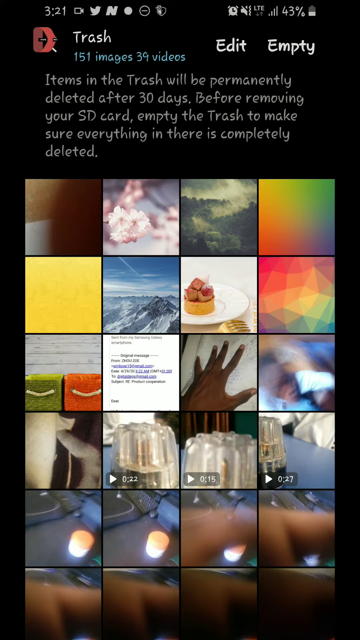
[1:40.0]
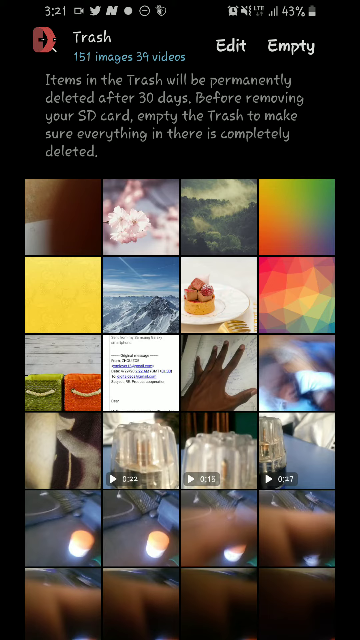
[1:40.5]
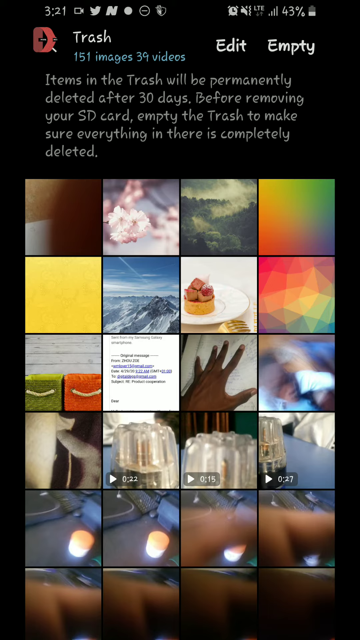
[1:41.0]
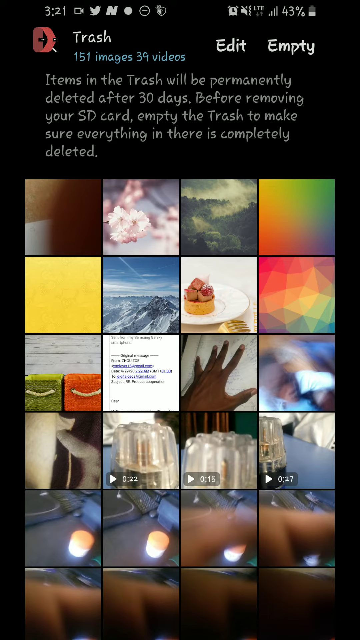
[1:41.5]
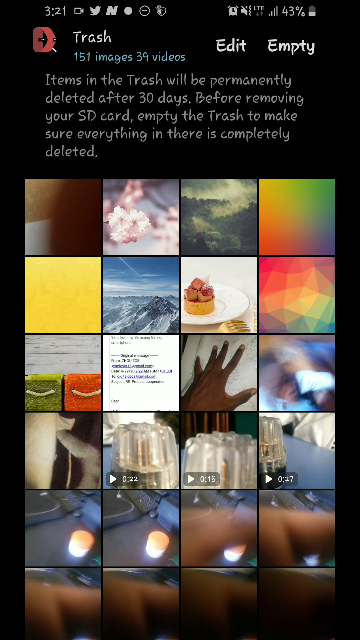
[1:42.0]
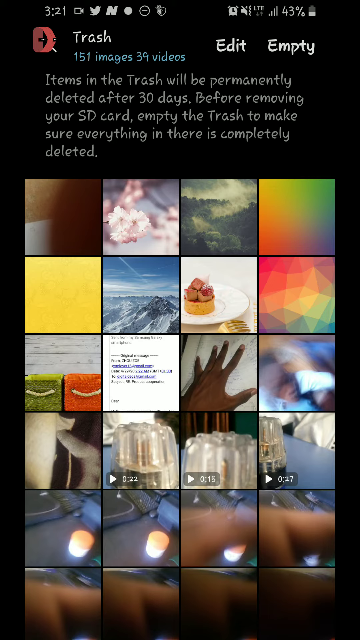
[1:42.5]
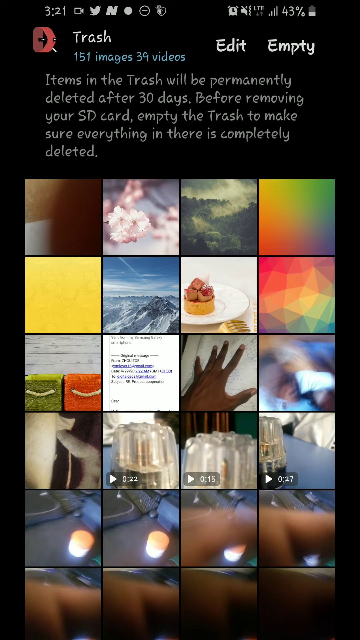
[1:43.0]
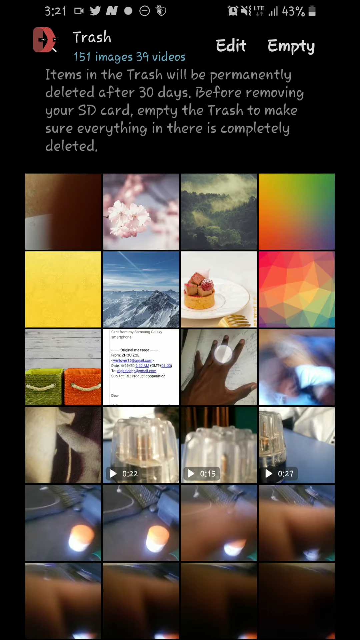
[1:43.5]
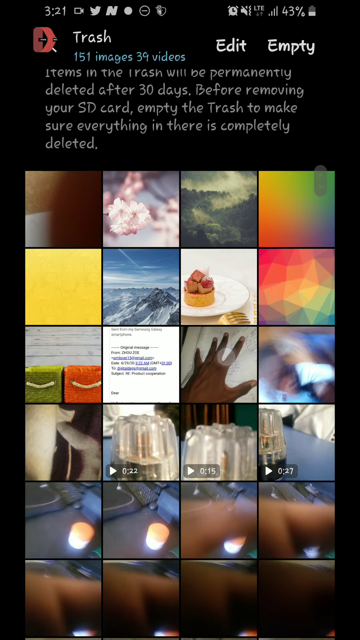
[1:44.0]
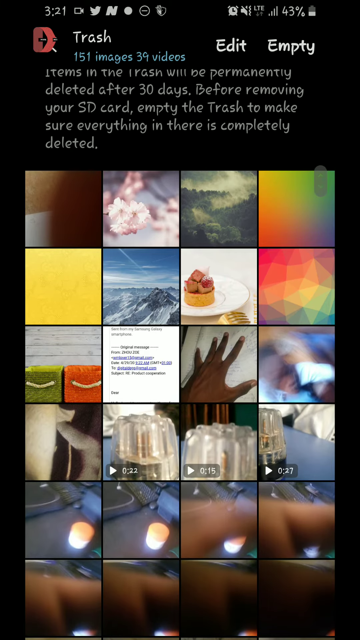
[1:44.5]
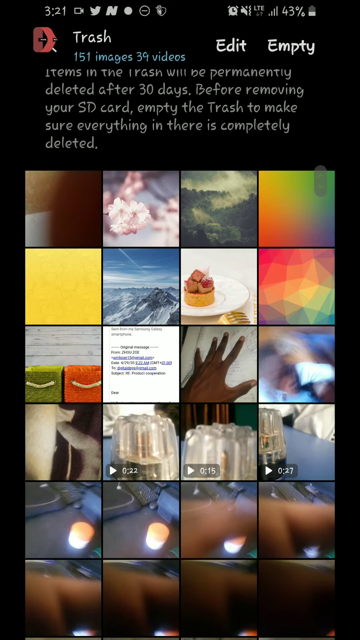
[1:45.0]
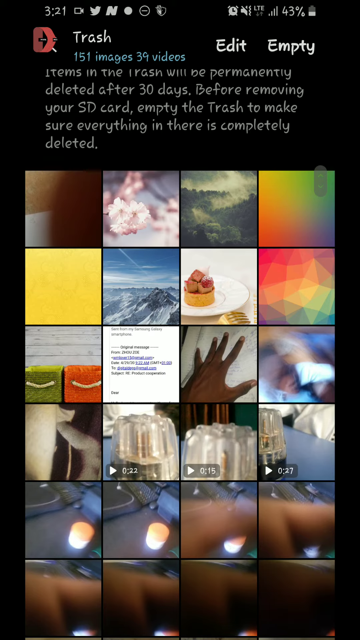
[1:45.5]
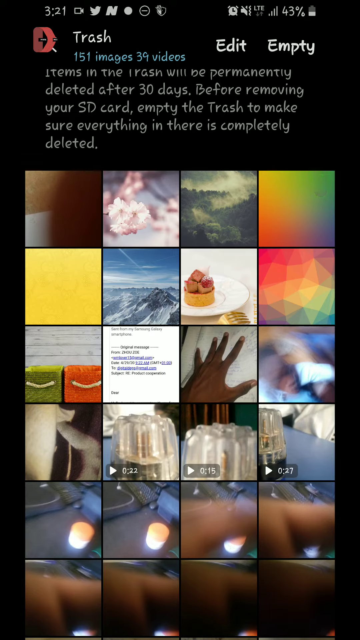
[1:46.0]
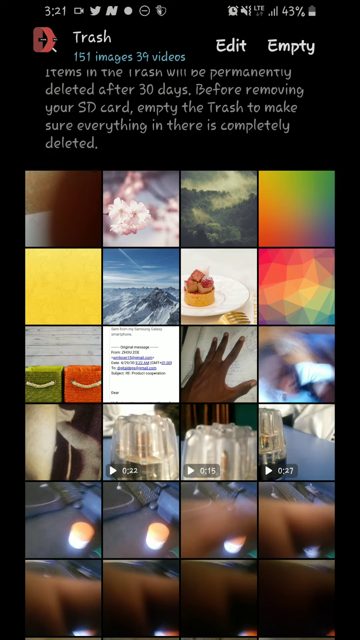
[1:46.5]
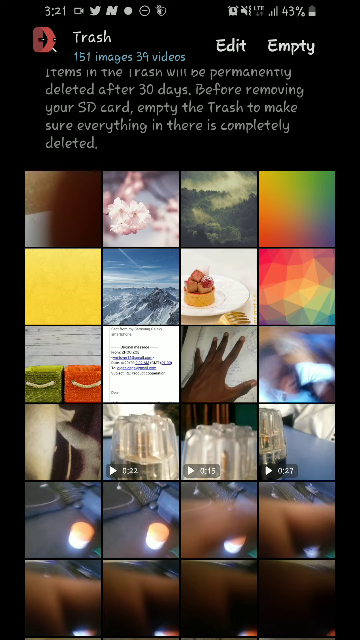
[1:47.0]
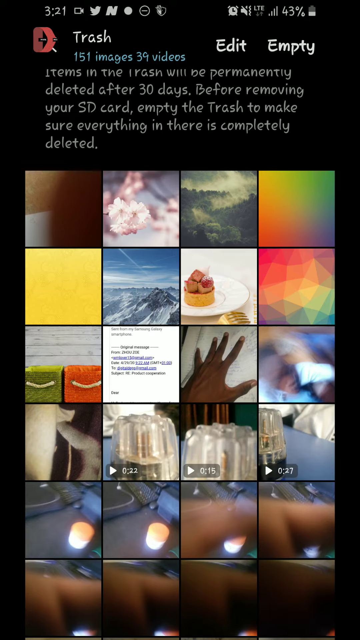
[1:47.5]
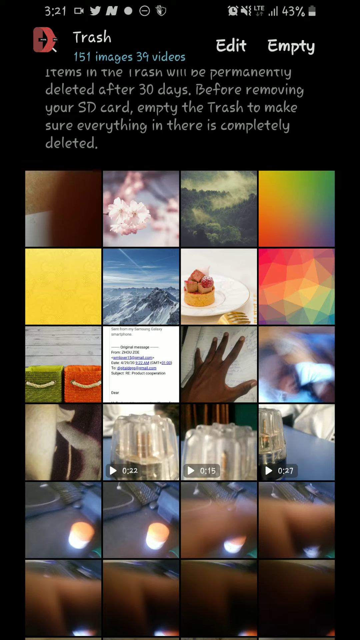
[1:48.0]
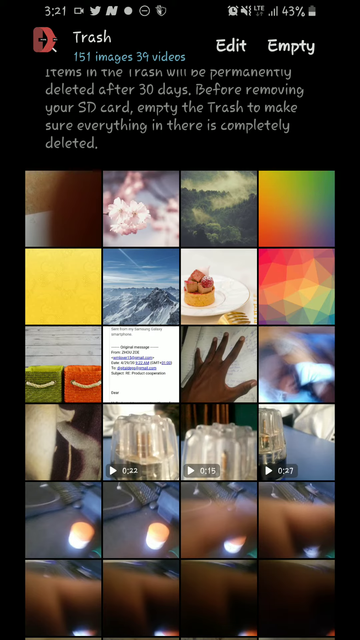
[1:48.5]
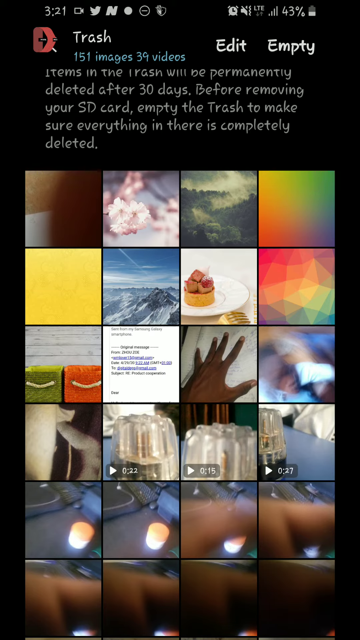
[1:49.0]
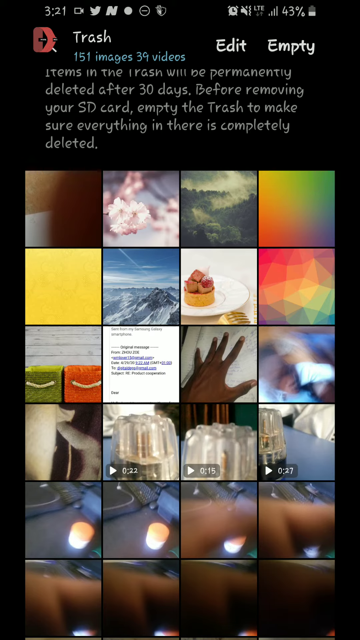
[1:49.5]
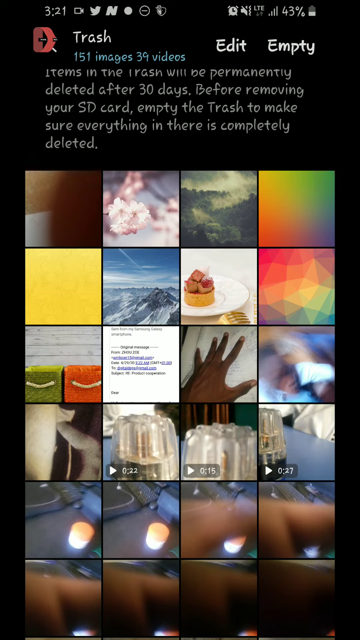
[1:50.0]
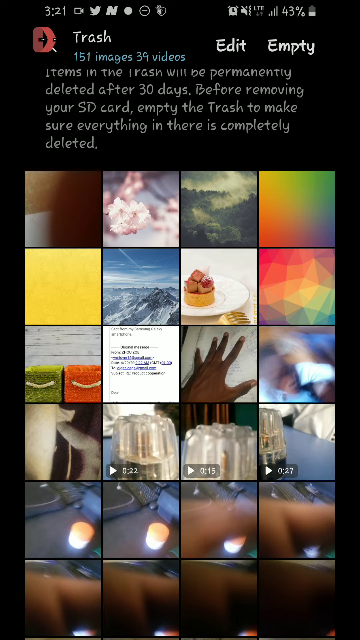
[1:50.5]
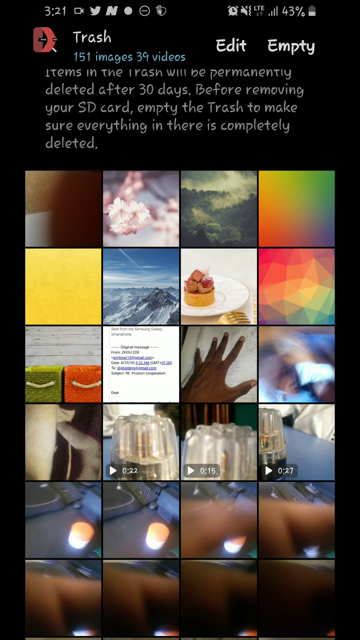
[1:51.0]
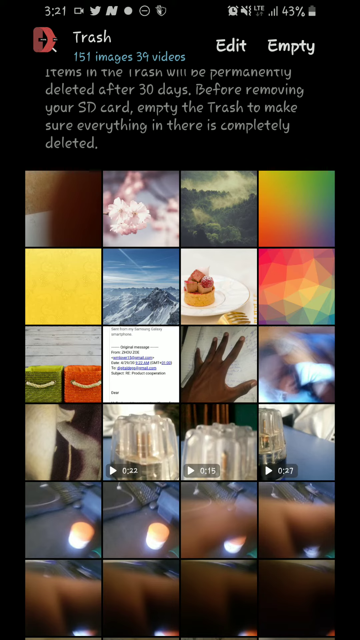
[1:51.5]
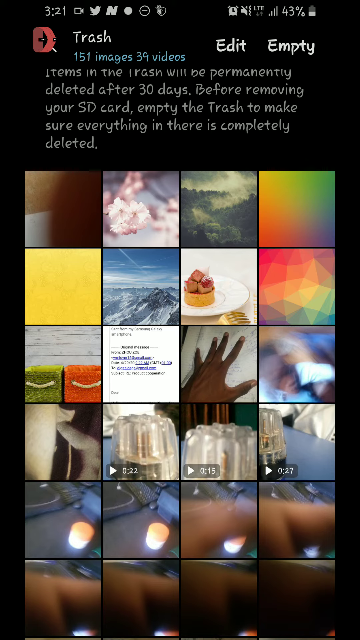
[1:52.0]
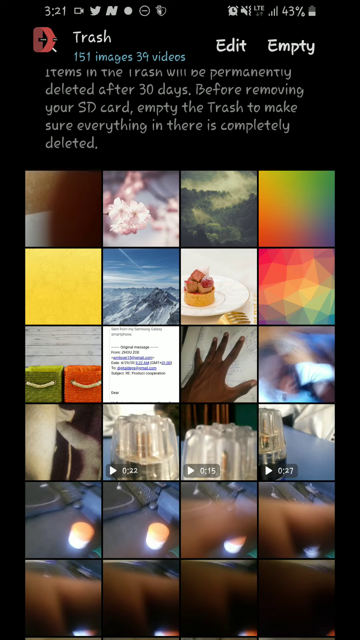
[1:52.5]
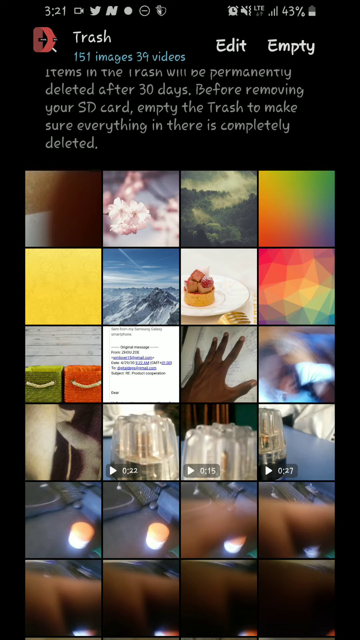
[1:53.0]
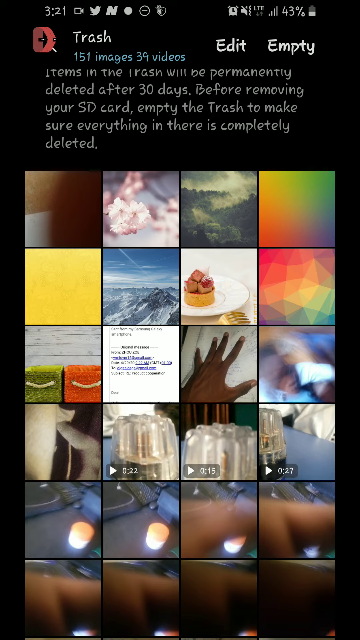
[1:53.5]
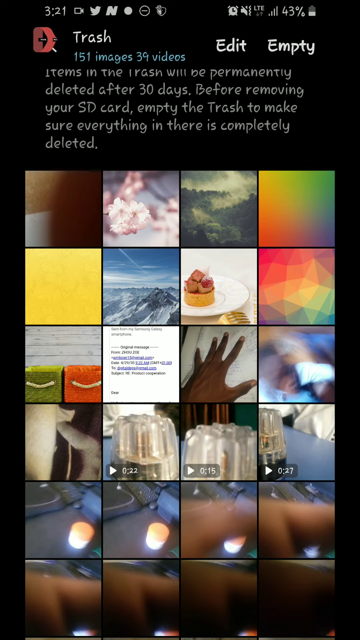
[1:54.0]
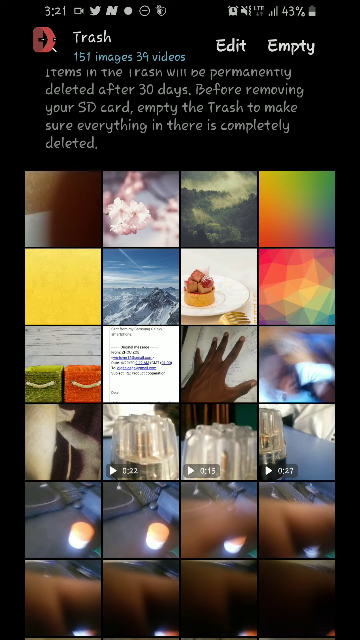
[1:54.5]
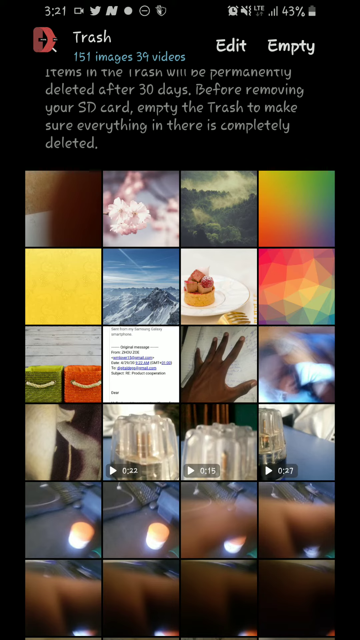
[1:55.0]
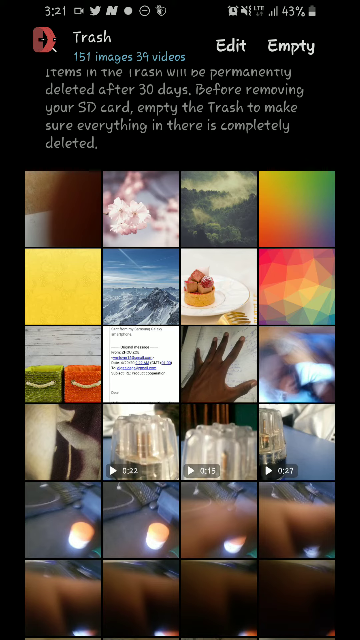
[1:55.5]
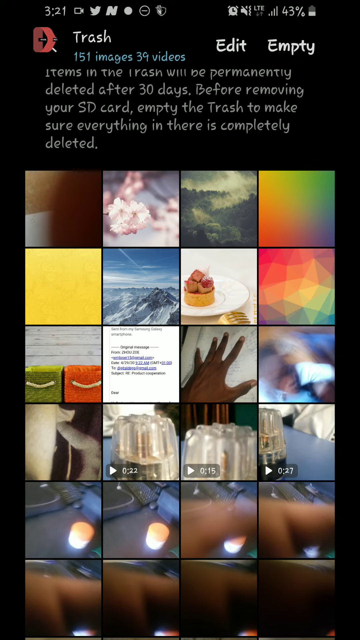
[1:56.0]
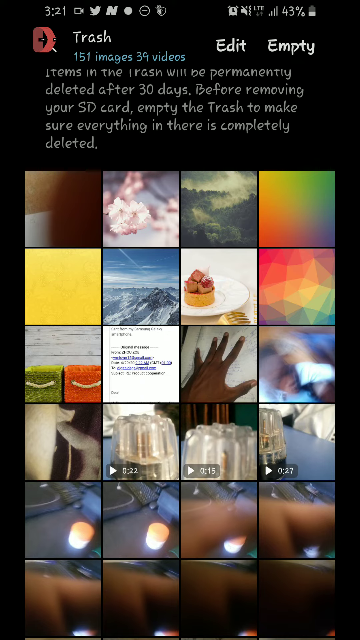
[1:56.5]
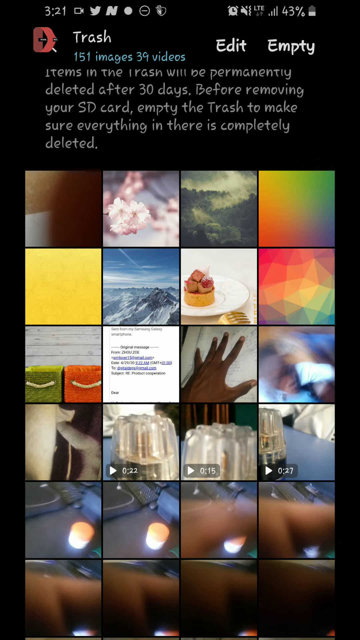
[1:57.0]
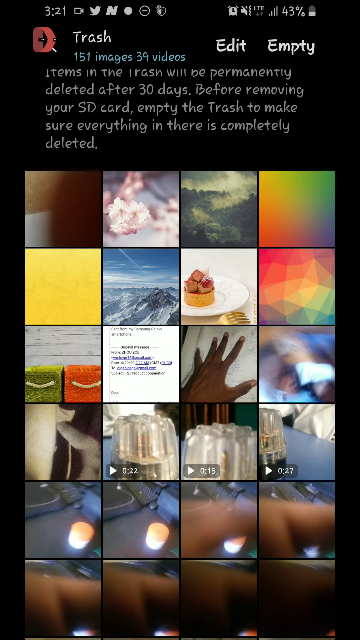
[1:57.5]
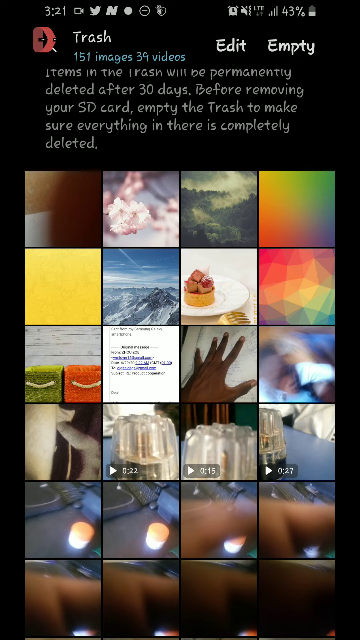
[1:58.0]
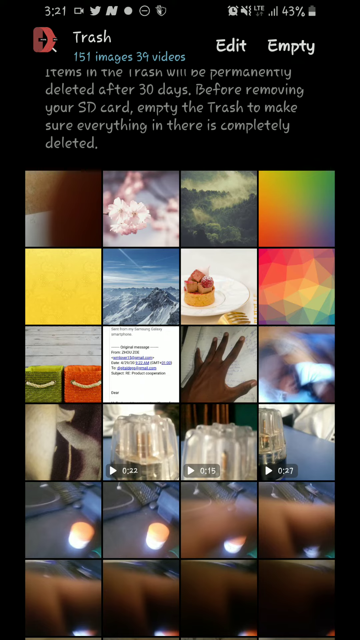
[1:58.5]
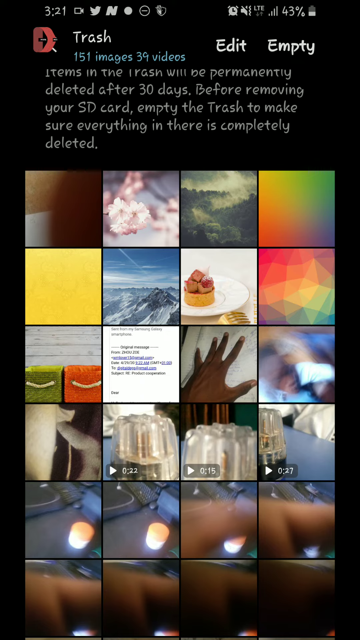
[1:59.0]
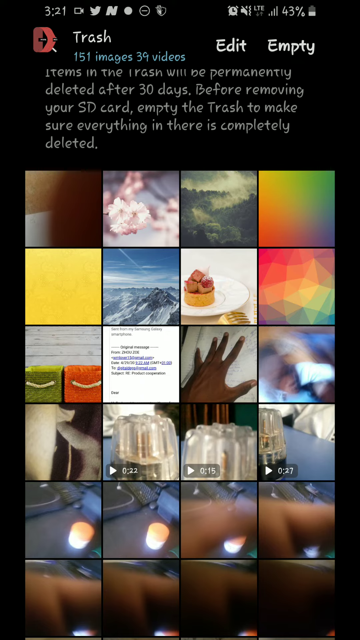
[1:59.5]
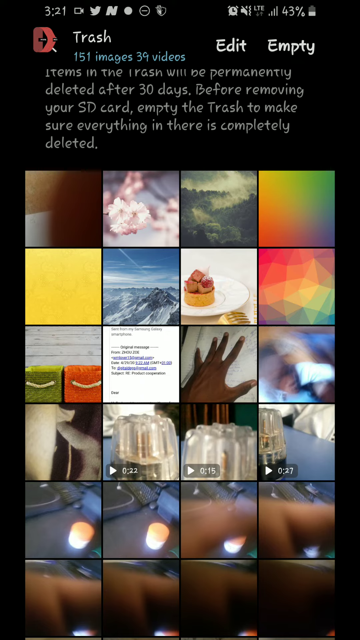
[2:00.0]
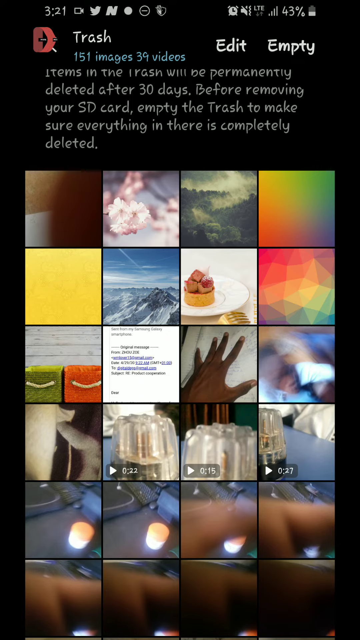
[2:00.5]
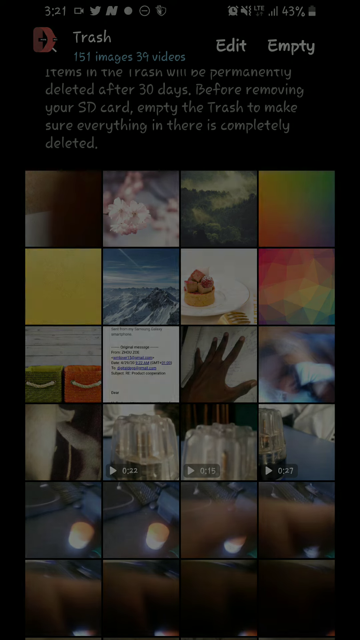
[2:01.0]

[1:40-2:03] The screen stays on the trash folder as a still screen with little happening. The video finally ends on the home lock screen.